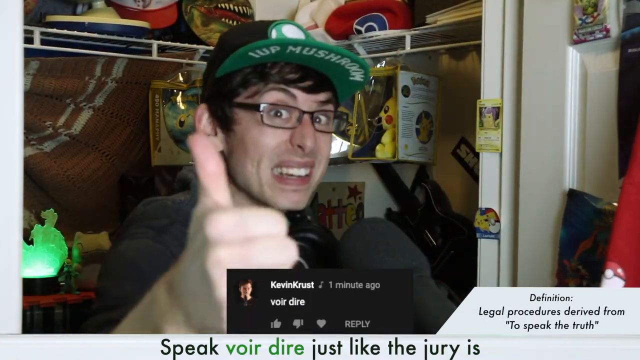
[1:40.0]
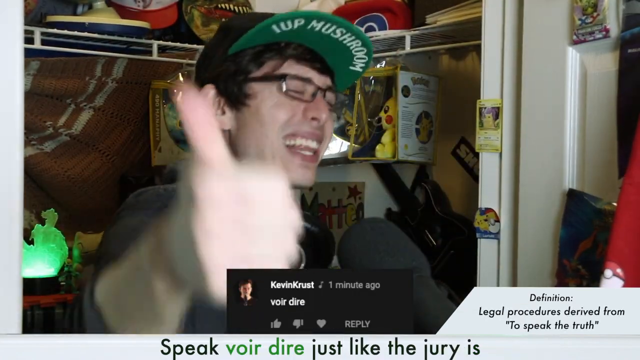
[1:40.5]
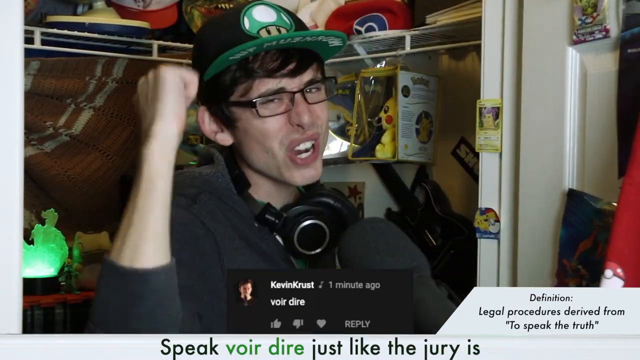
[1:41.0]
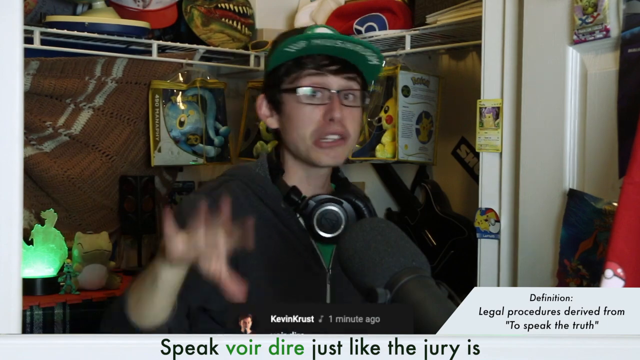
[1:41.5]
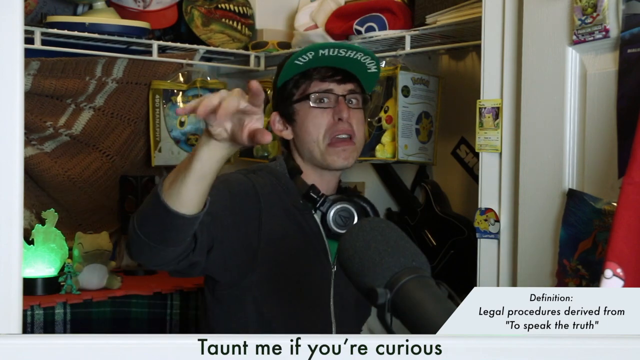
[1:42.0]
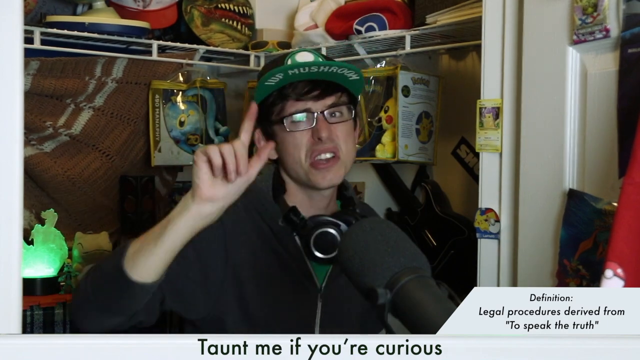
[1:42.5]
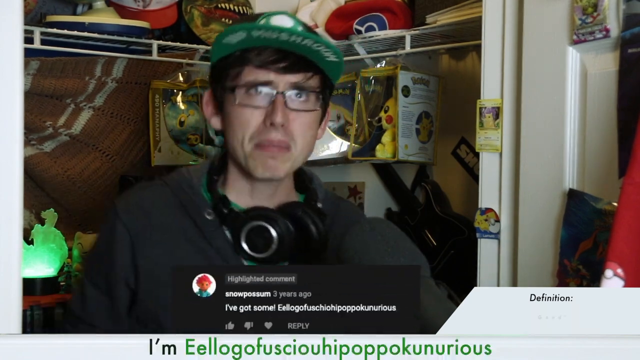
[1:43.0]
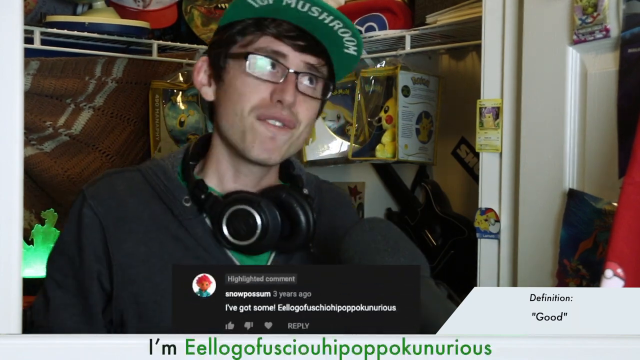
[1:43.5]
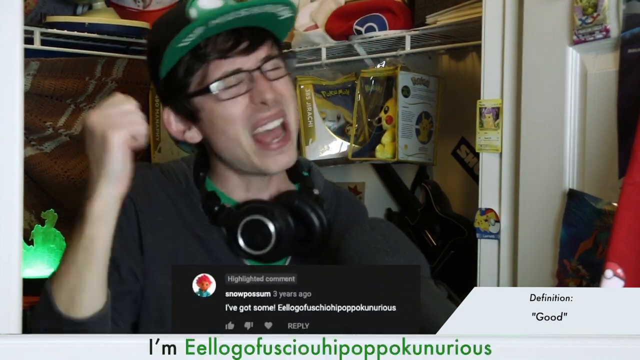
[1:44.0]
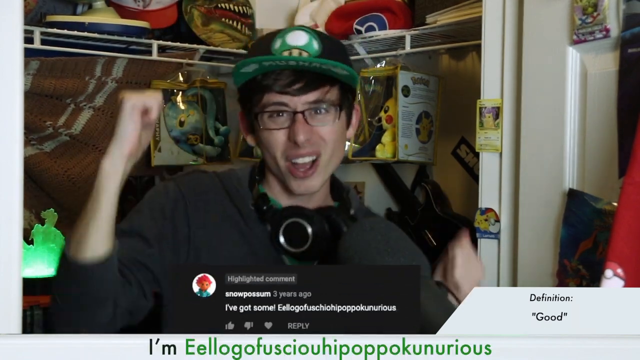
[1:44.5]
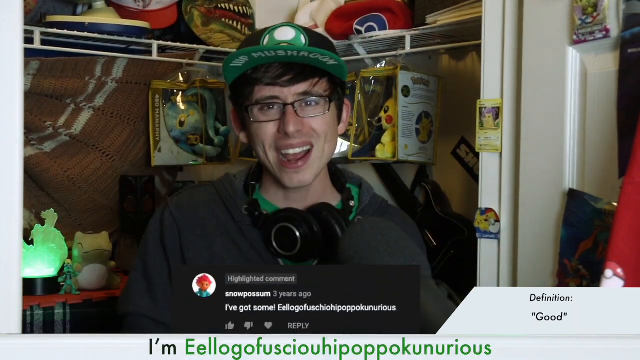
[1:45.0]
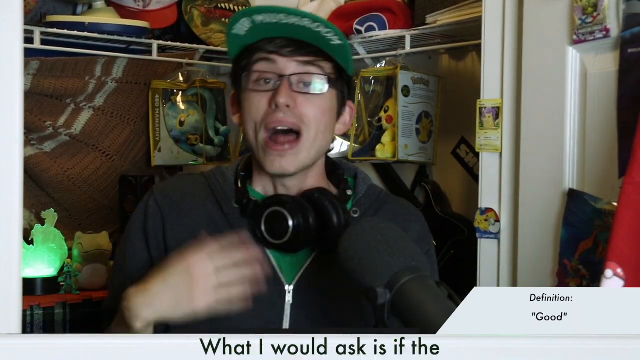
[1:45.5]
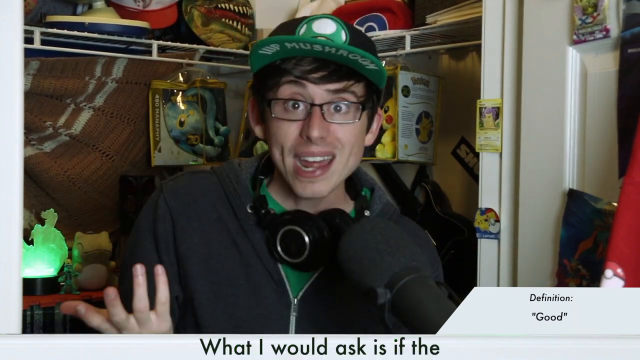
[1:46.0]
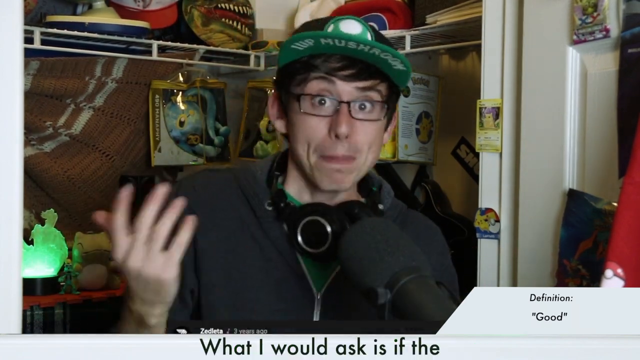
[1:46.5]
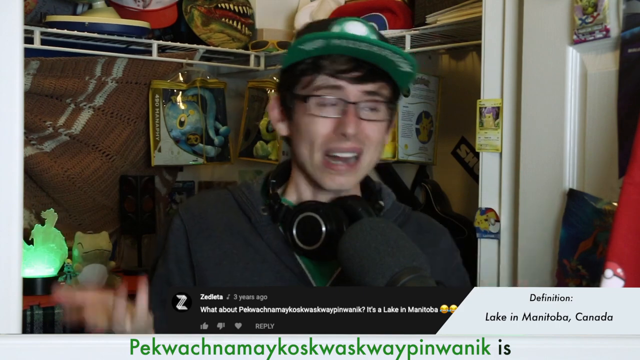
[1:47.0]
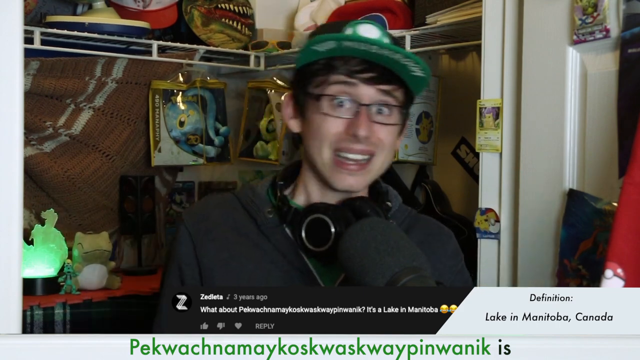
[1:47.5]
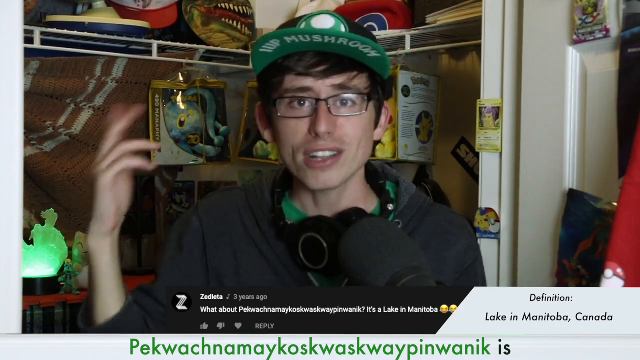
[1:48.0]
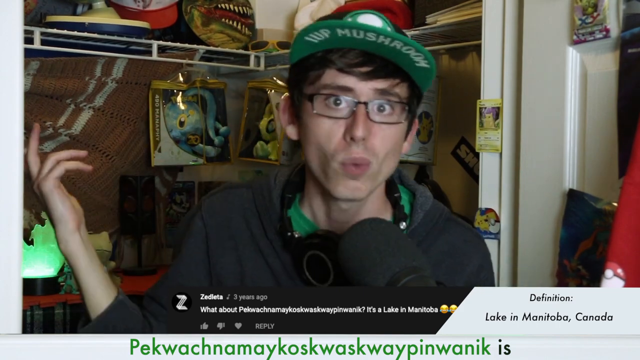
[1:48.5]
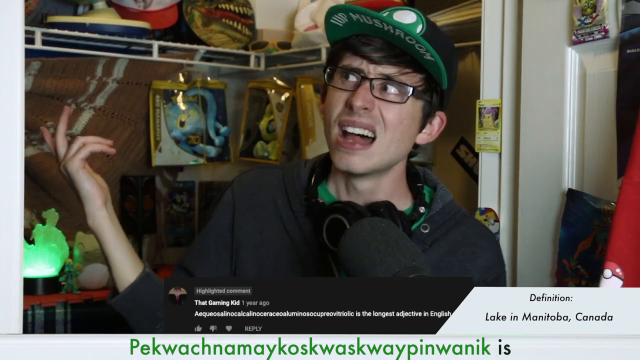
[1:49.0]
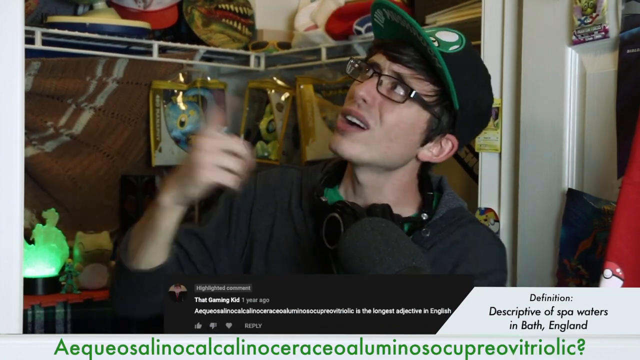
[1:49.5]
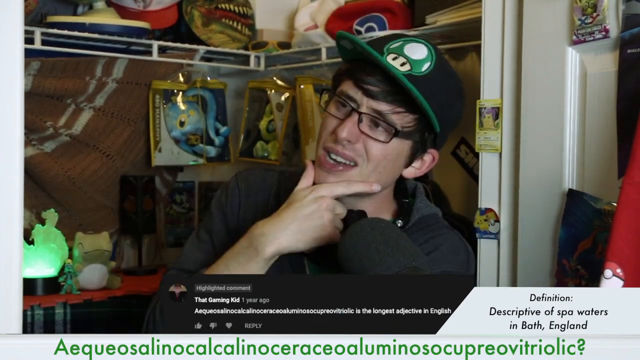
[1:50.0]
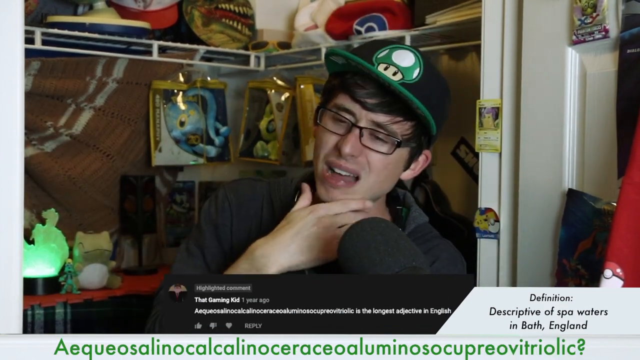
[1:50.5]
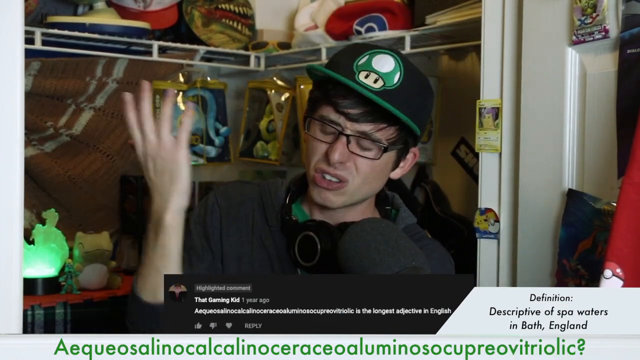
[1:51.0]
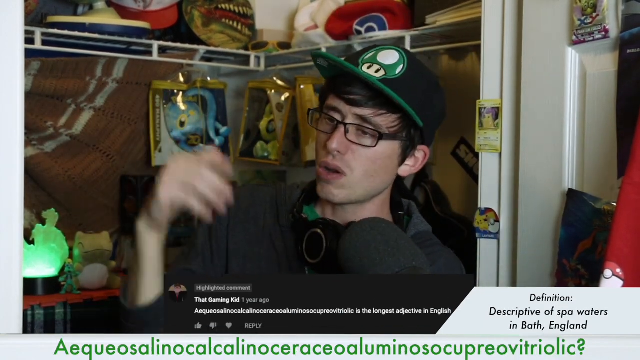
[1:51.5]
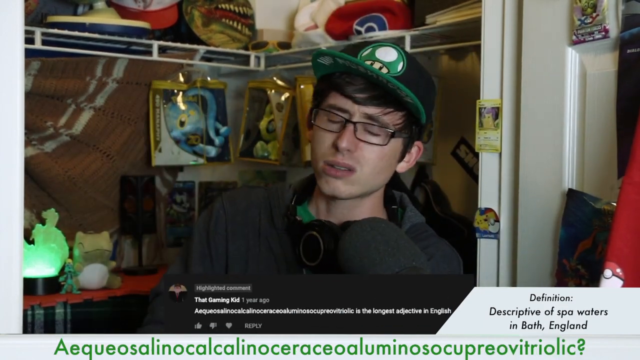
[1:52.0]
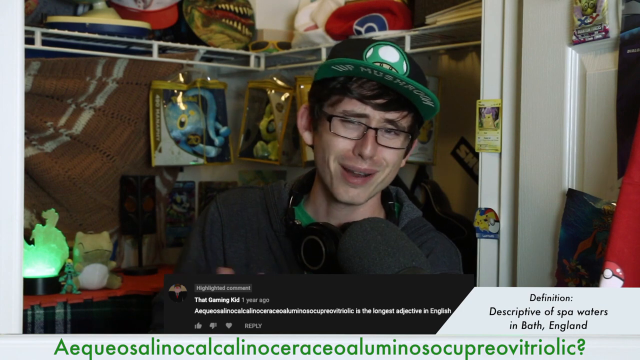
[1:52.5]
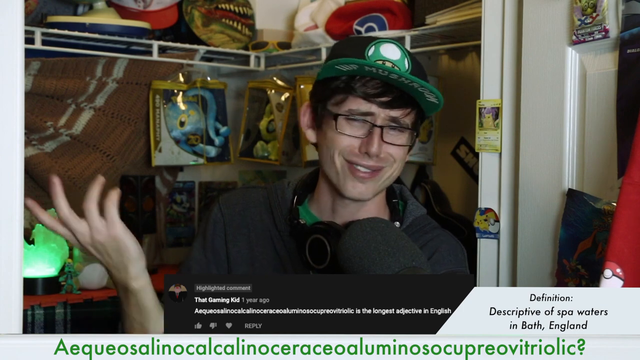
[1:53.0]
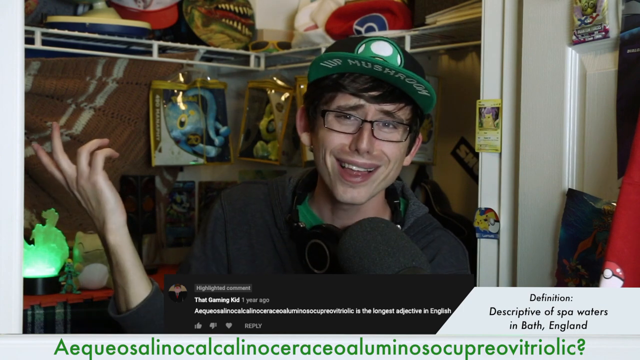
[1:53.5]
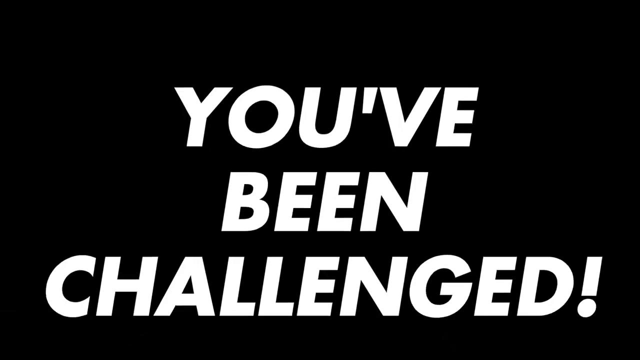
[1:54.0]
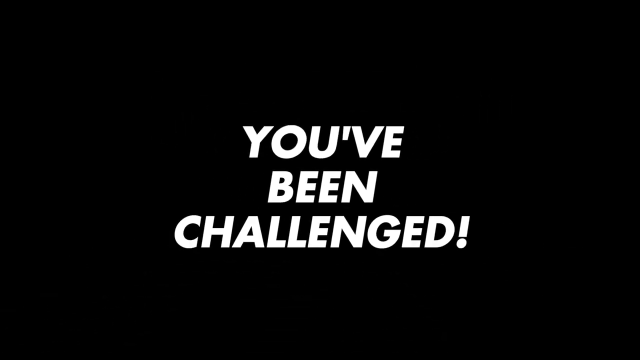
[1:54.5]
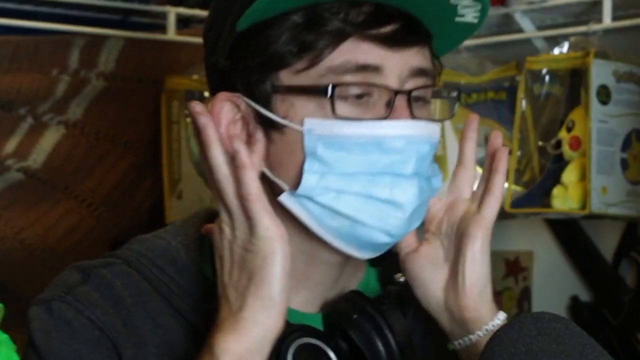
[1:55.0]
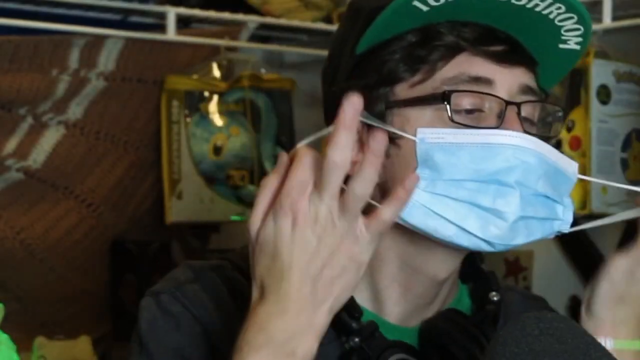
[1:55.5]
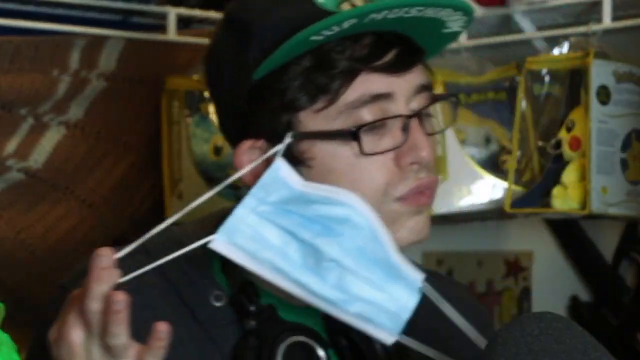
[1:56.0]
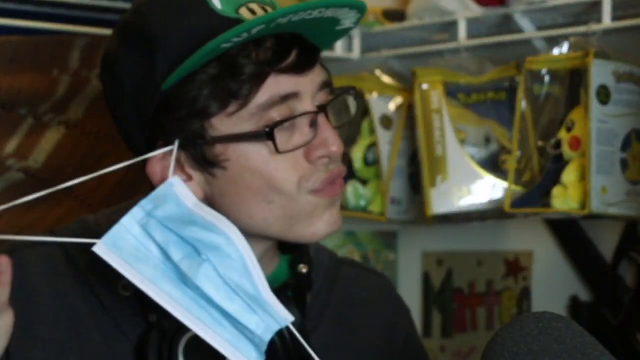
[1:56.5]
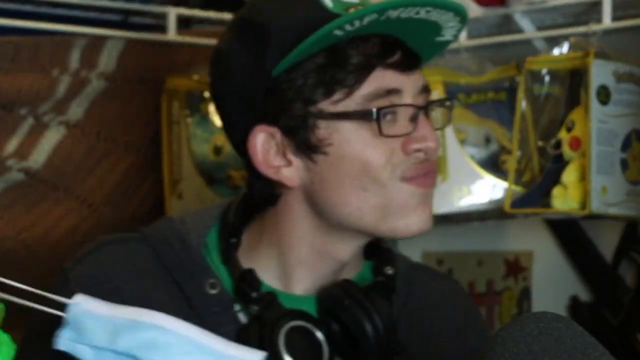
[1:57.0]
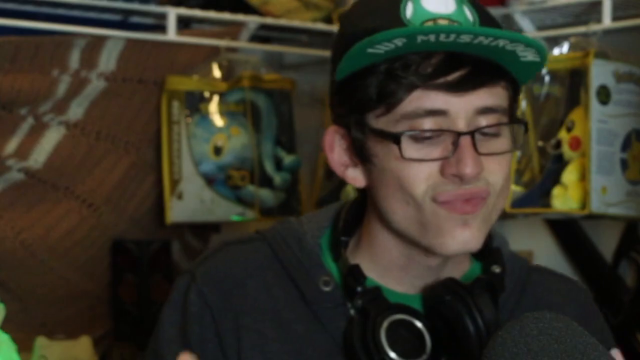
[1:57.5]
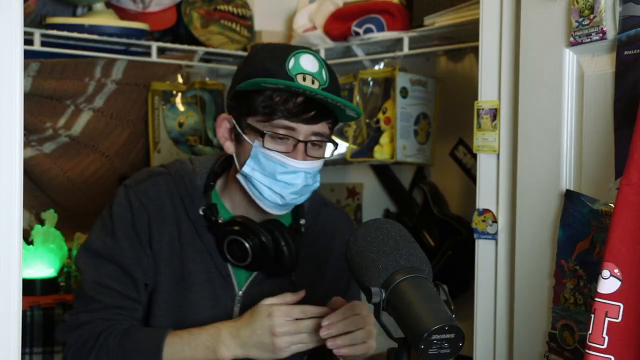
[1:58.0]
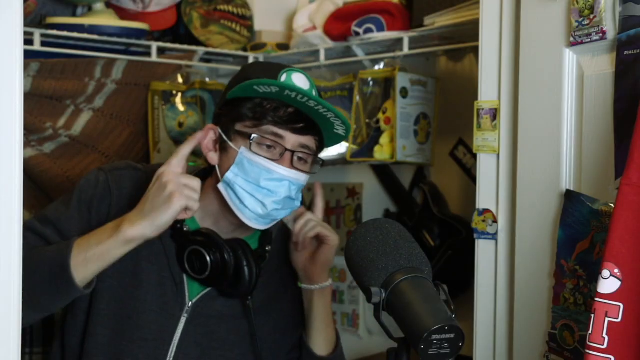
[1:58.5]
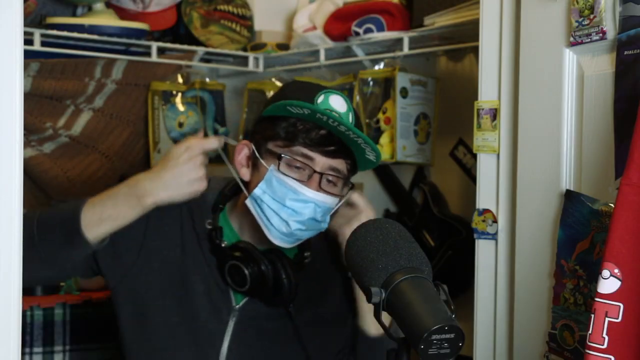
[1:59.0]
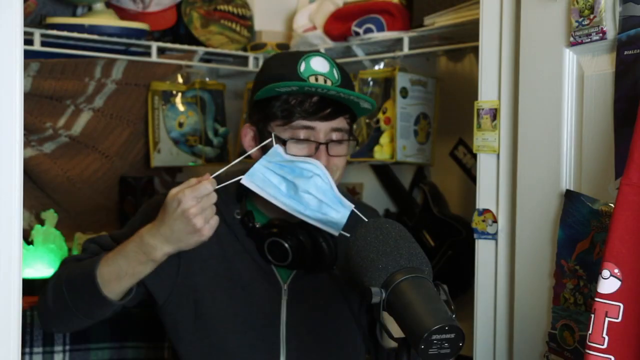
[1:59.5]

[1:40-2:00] A comment from KevinKrust reads "voir dire", with the definition "legal procedure derived from 'to speak the truth'". The man continues to rap and the comment changes to one from snowpossum: "I've got some! Eellogofuschiohipoppokunarious", with the definition changing to "Good". The next comment, from Zedletta, reads "What about Pekwachnamaykoskwaskwaypinwanik? It's a lake in Manitoba" with a crying face emoji, and the definition changes to "Lake in Manitoba, Canada". The man keeps rapping as another comment appears with a long word that is hard to see clearly. Once he finishes using the last word, the screen turns black and the words "YOU'VE BEEN CHALLENGED!" appear in white, then the black screen disappears. The camera zooms in closely on the man's face; he has the face mask on again and starts taking it off.